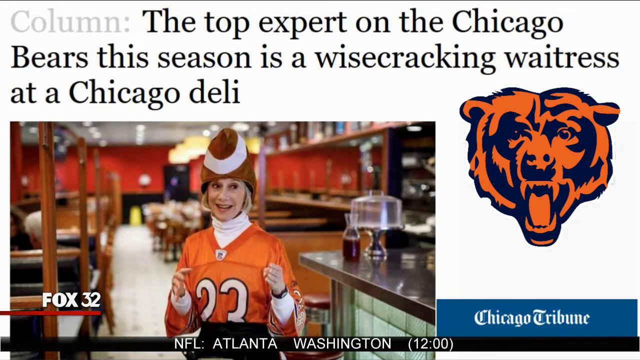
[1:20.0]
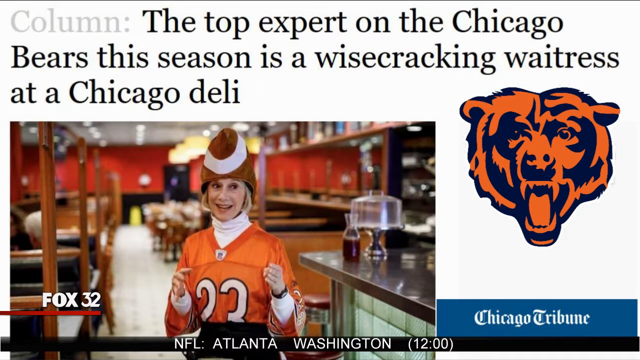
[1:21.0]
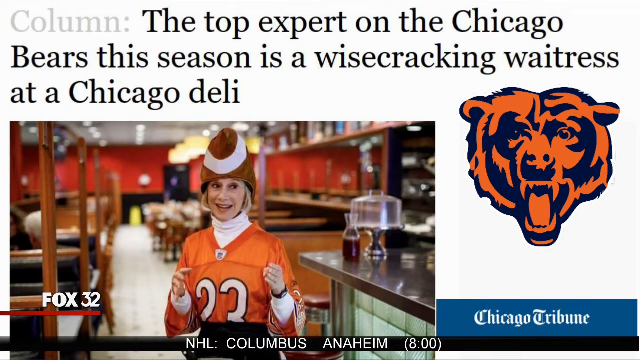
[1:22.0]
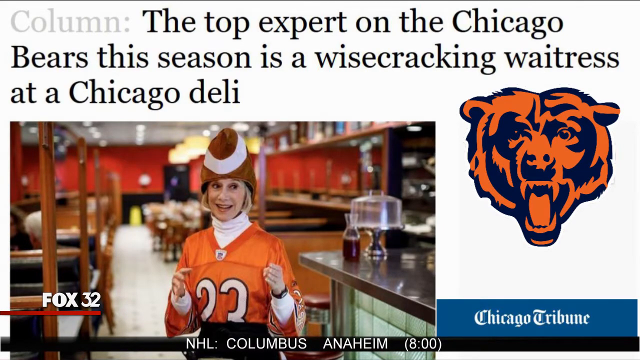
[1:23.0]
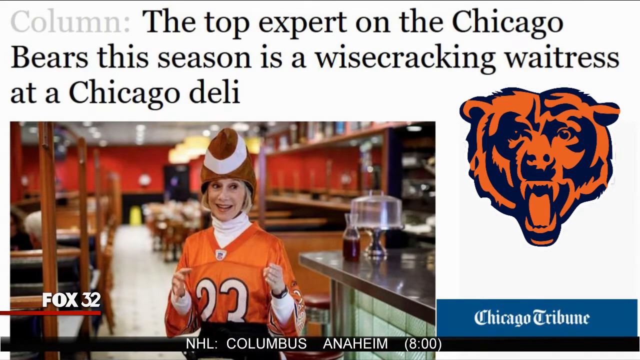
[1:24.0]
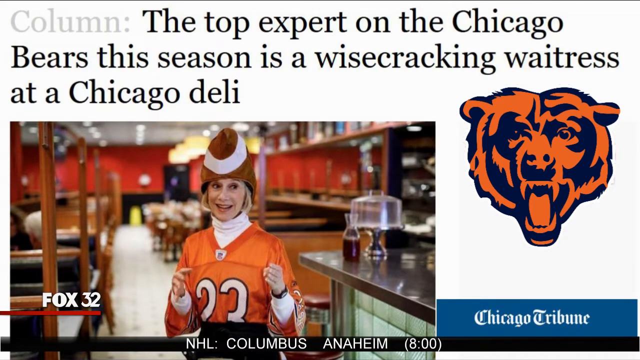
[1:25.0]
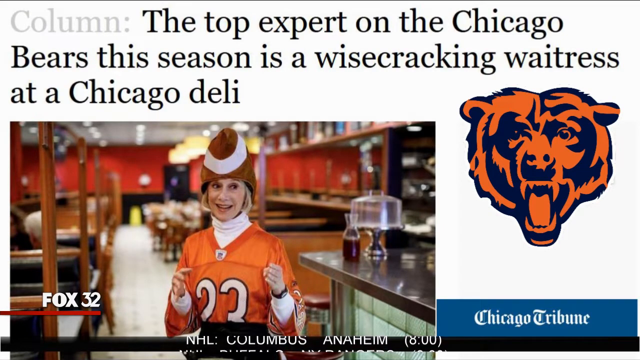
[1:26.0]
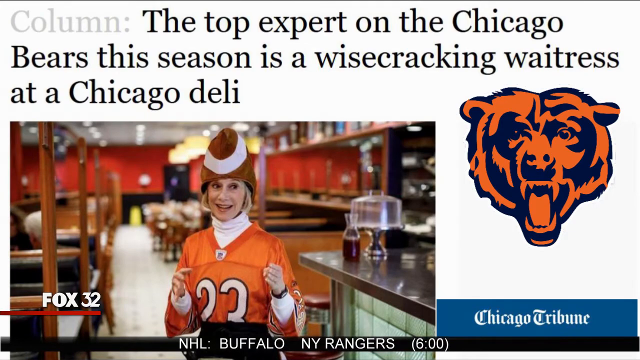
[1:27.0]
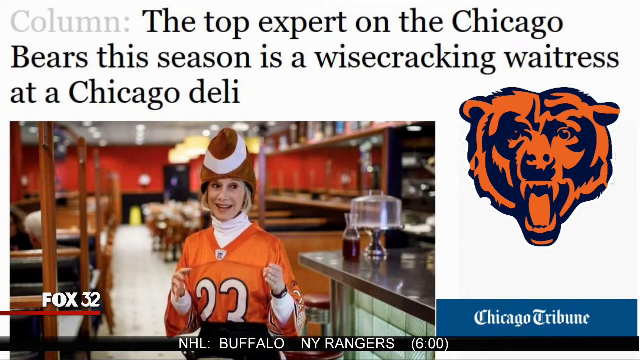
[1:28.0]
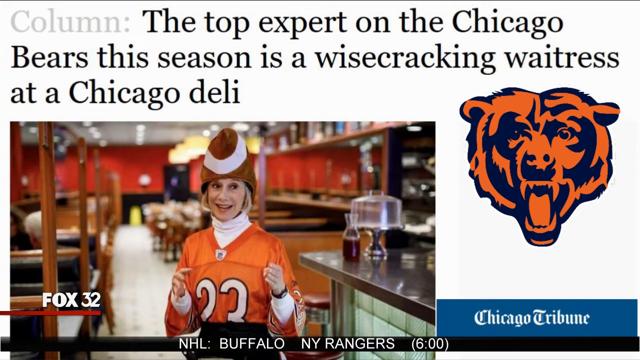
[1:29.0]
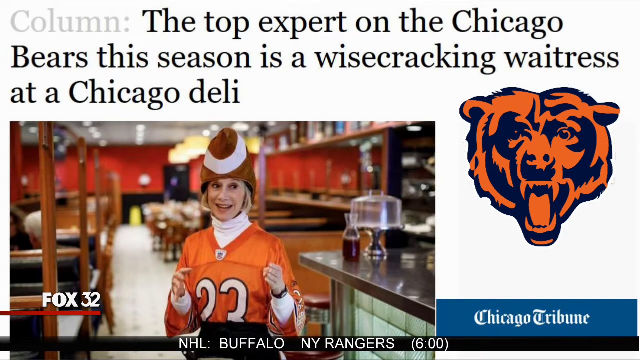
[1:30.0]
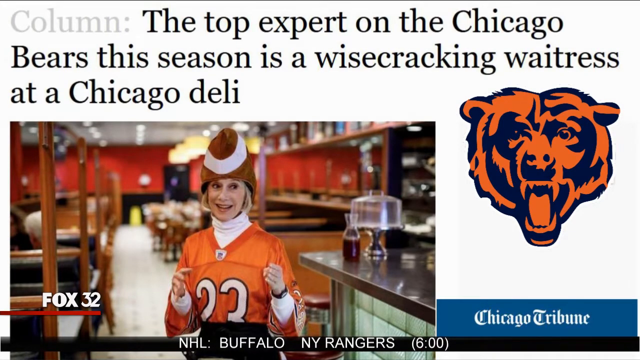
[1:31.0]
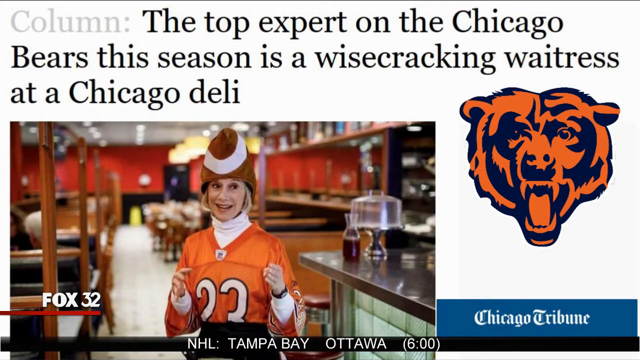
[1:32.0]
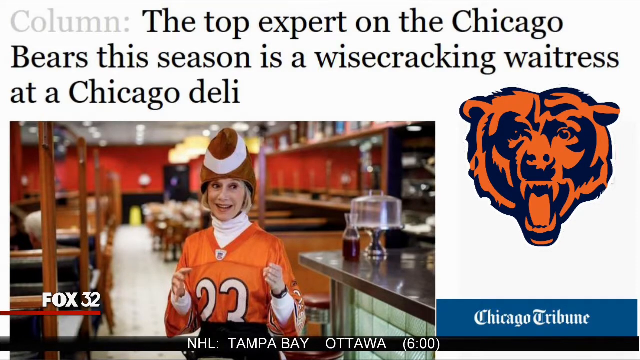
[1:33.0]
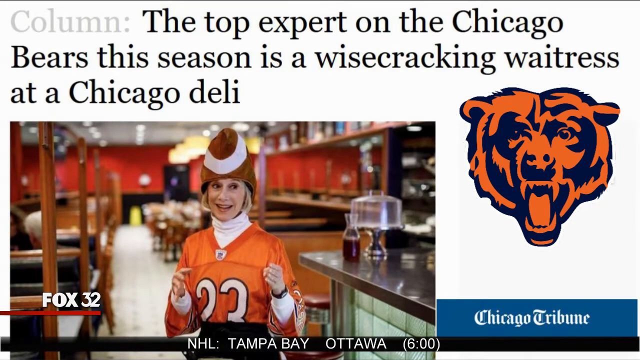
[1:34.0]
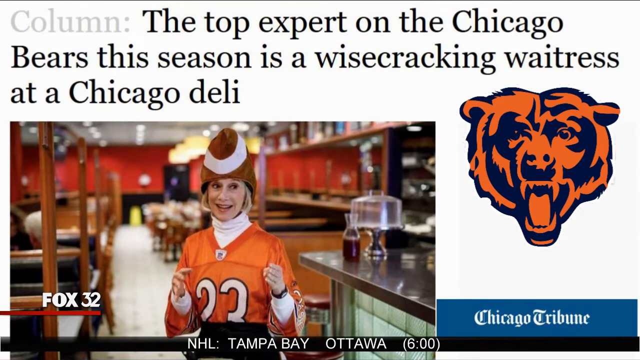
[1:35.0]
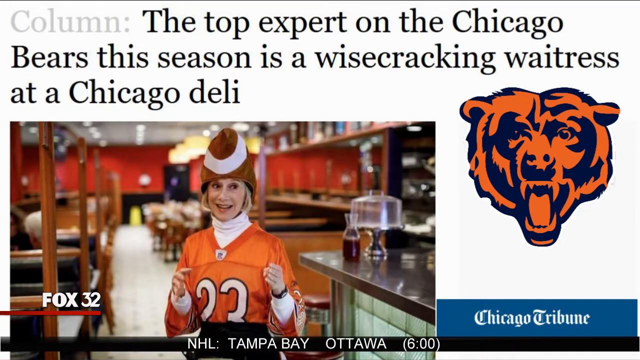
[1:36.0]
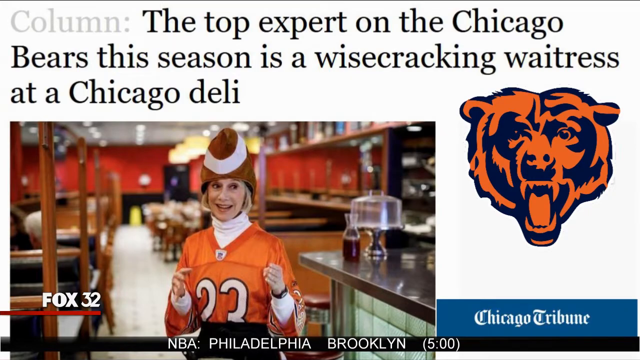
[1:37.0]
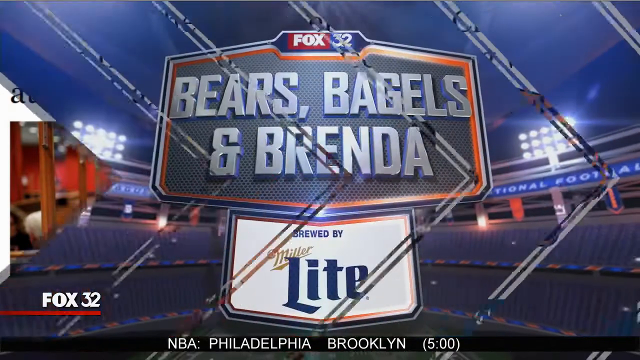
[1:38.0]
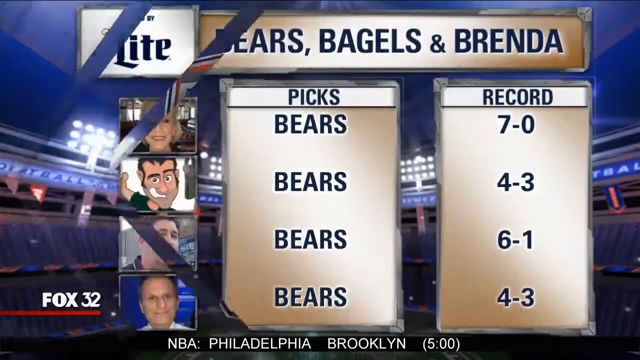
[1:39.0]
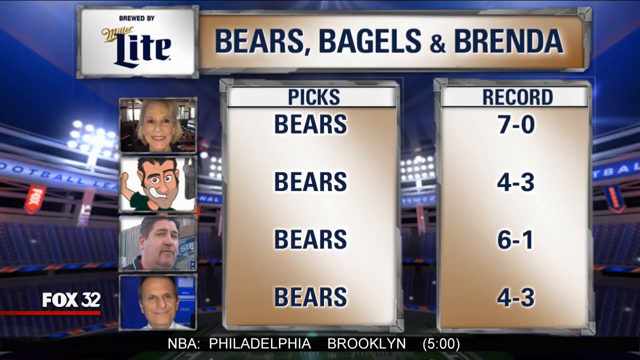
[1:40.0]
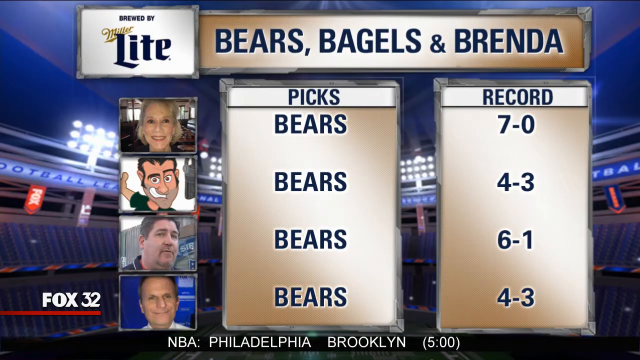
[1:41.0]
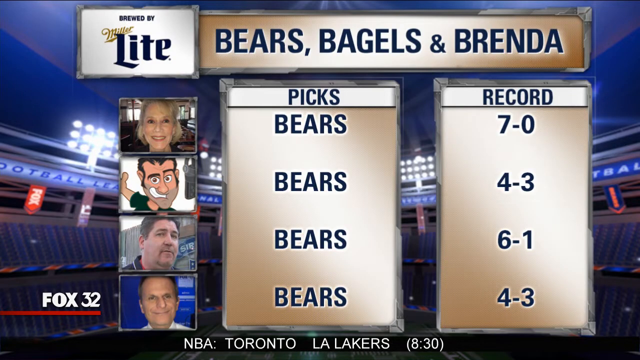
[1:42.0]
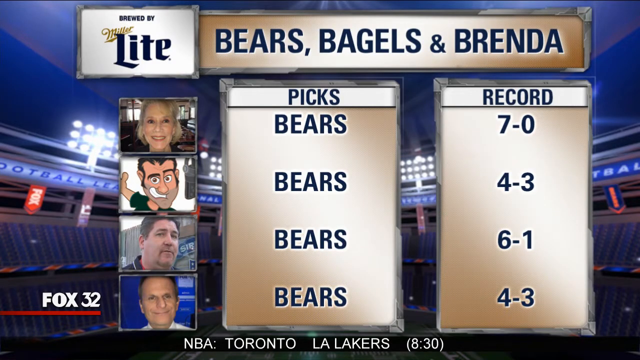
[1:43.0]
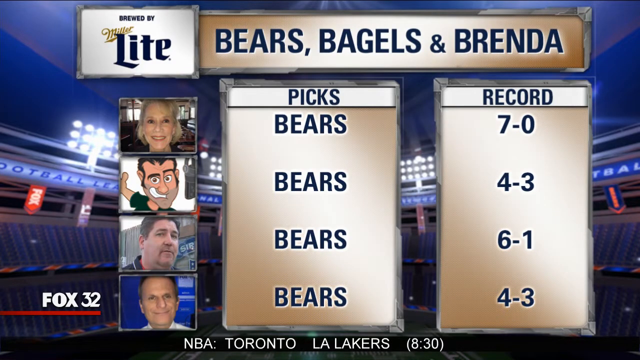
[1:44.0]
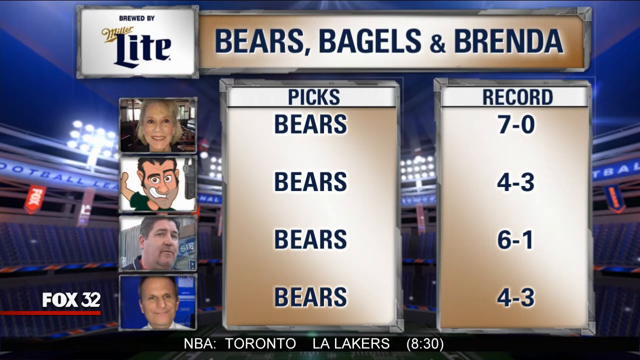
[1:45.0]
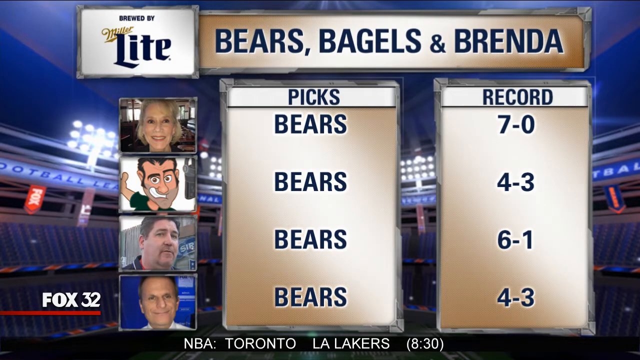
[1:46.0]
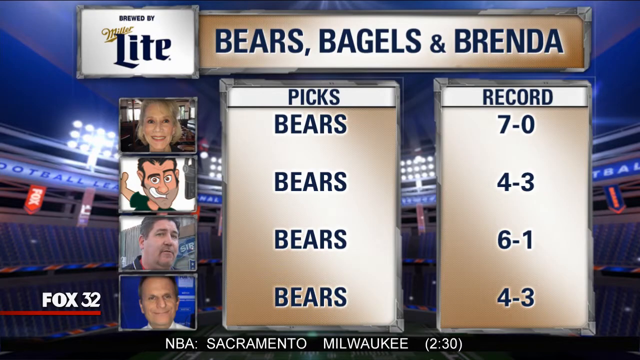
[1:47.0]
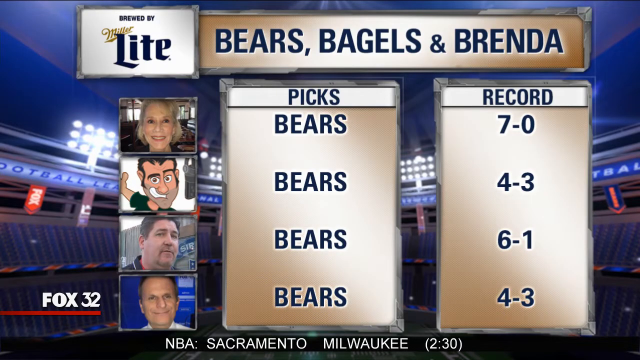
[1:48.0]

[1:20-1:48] An online news article is shown with the heading "the top expert on the Chicago Bears this season is a wisecracking waitress at a Chicago deli." Beneath the heading is an image of a woman with short white-blonde hair wearing an orange American football jersey with numbers on the front; only the top half of the numbers is visible, so it is possibly a 23 or a 33. Under the jersey she wears a long-sleeved white turtleneck jumper, and on her head is a novelty hat, a plush American football made into a hat. On the right is a blue and orange logo of the Bear. The video stays on this image of the article for quite a while.